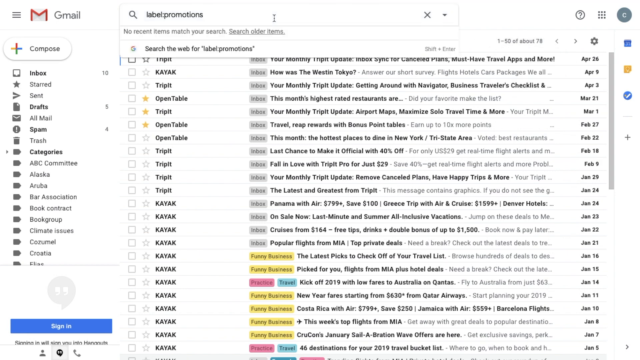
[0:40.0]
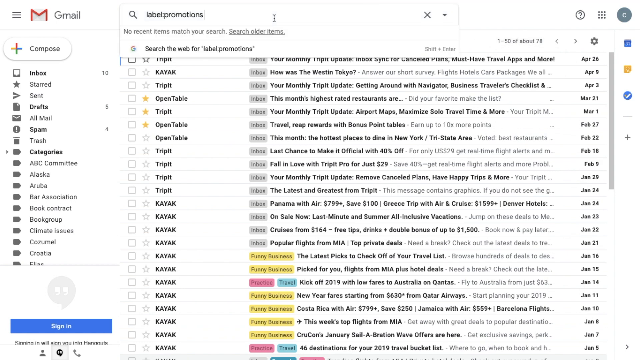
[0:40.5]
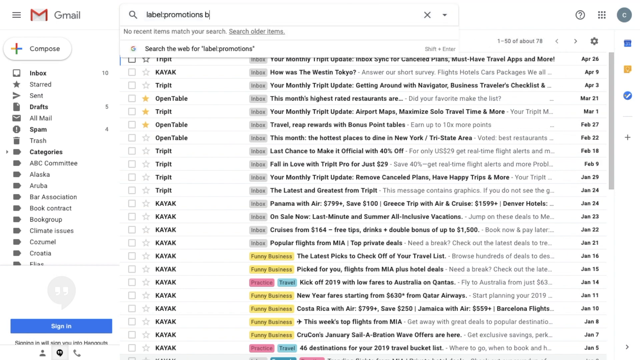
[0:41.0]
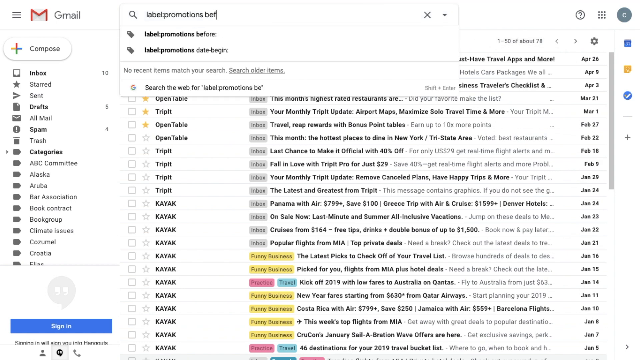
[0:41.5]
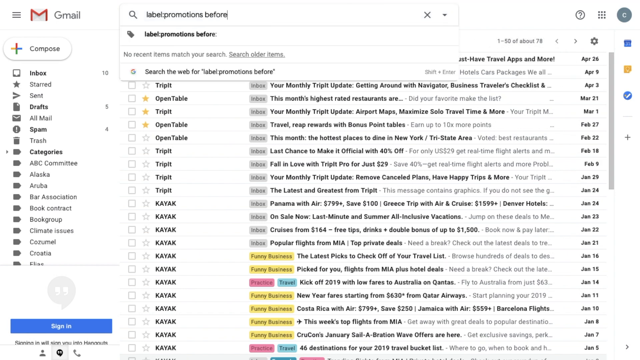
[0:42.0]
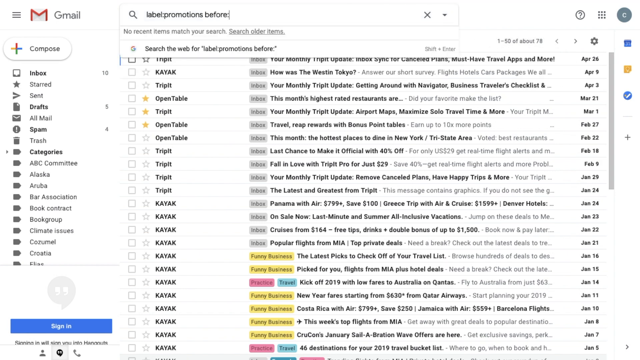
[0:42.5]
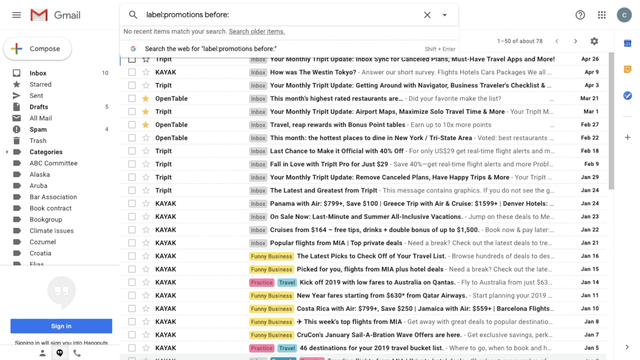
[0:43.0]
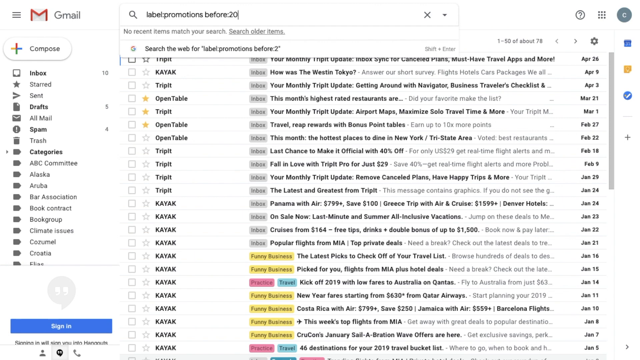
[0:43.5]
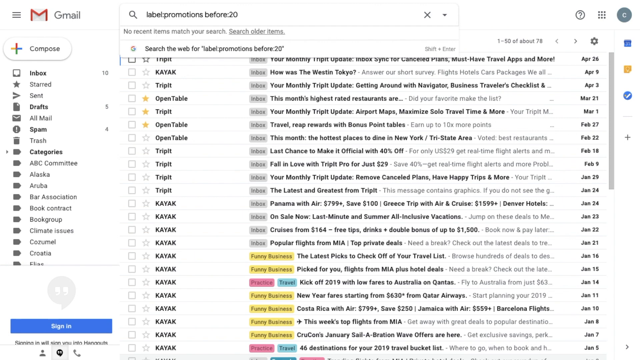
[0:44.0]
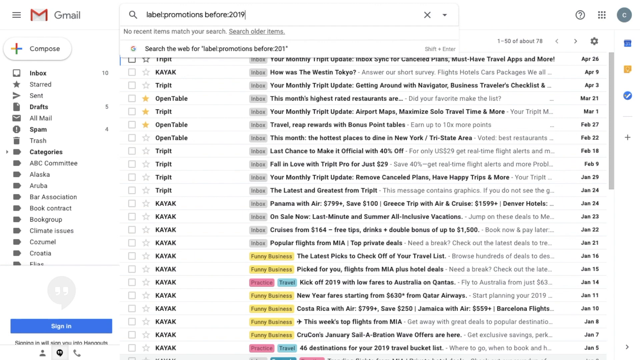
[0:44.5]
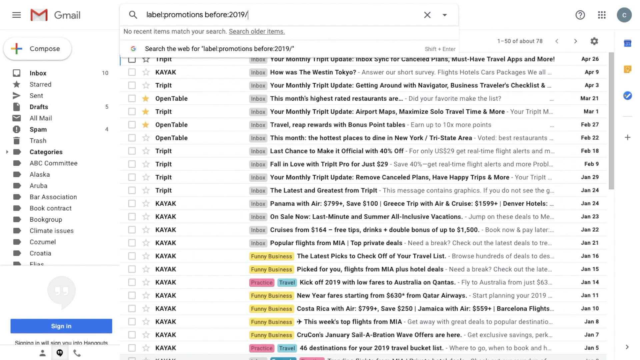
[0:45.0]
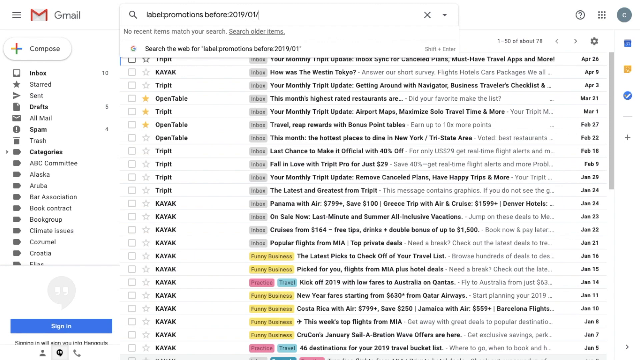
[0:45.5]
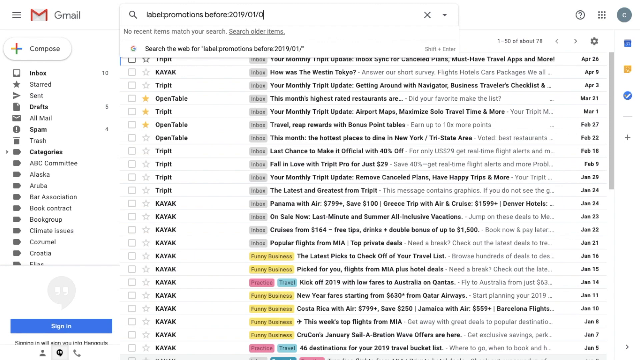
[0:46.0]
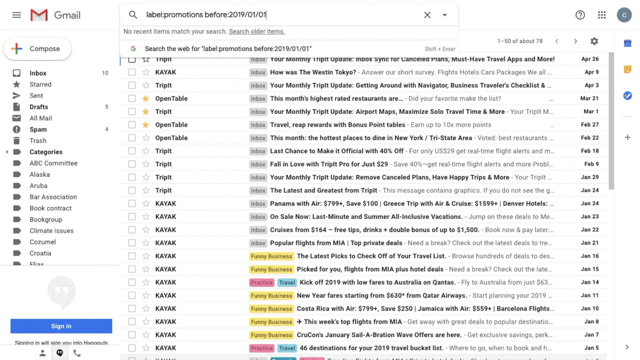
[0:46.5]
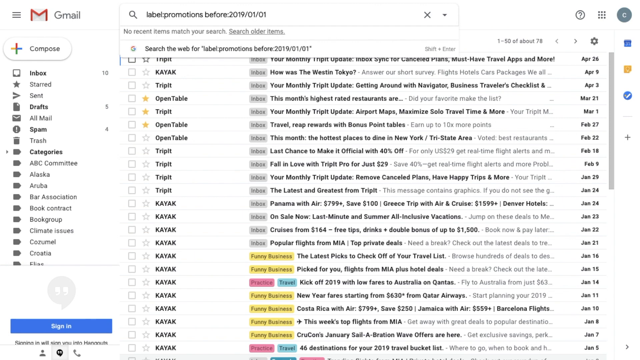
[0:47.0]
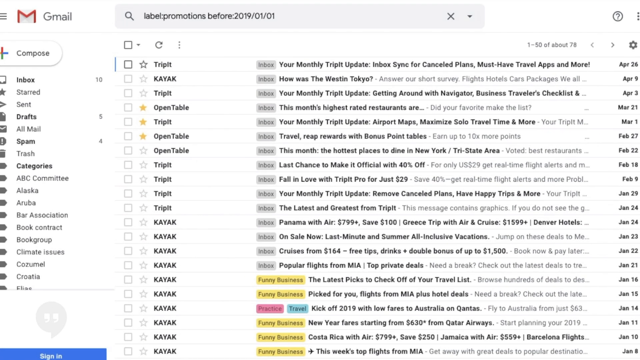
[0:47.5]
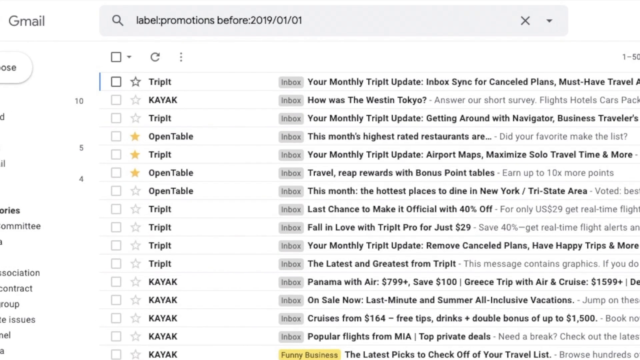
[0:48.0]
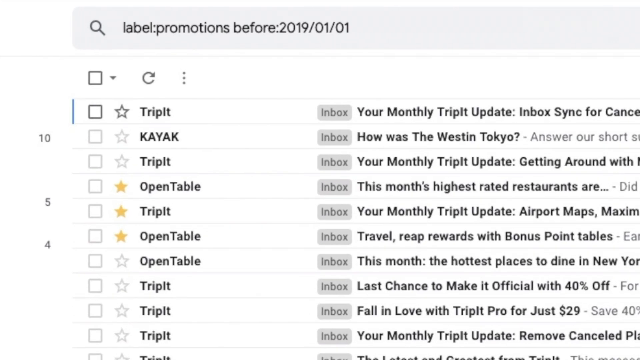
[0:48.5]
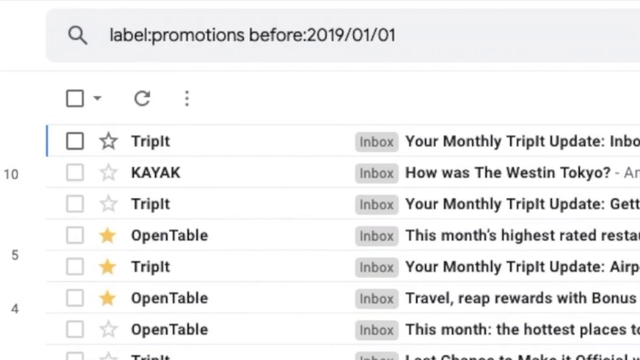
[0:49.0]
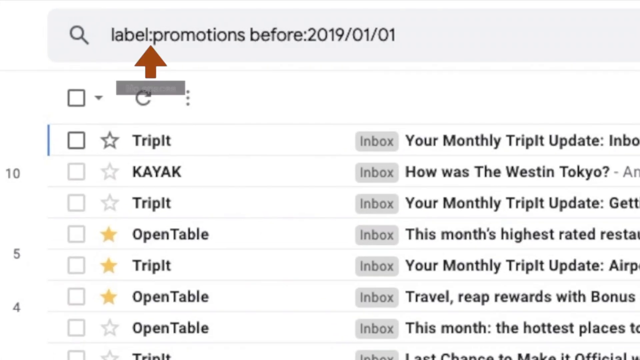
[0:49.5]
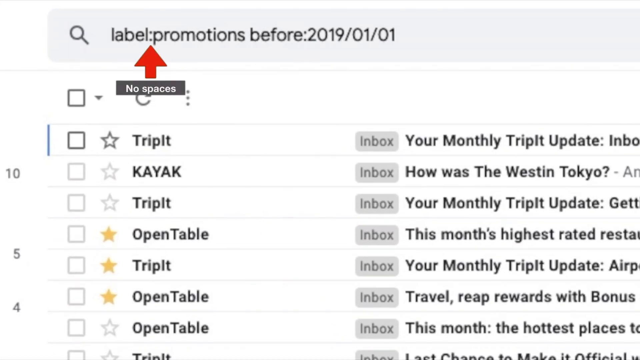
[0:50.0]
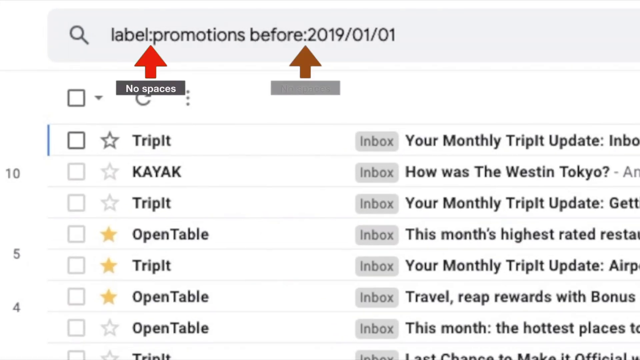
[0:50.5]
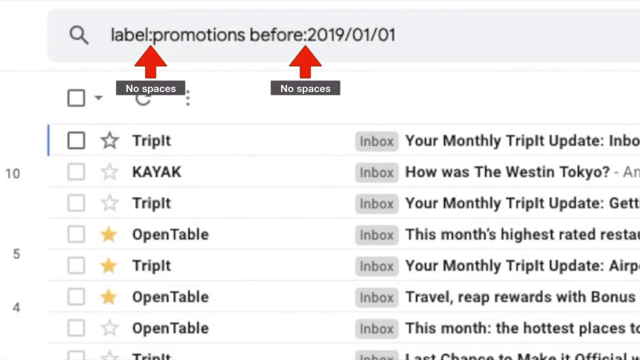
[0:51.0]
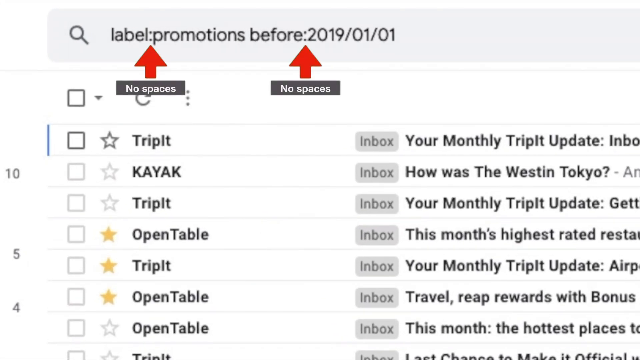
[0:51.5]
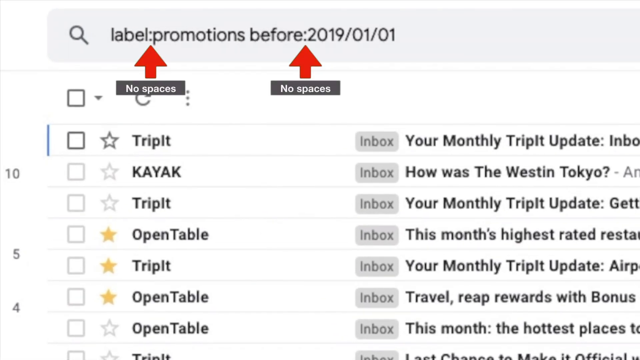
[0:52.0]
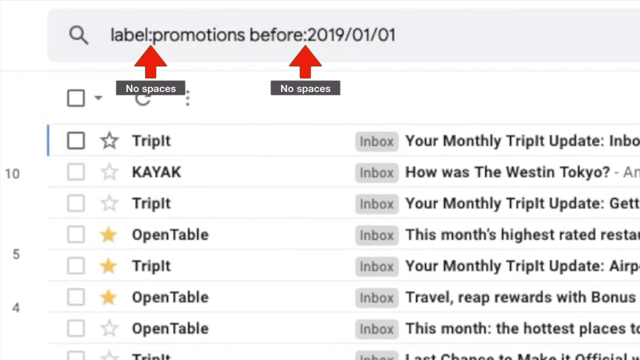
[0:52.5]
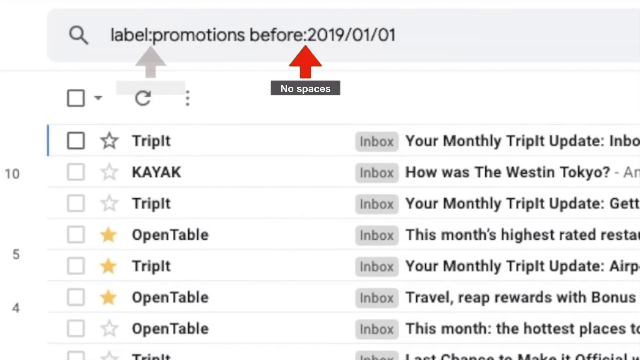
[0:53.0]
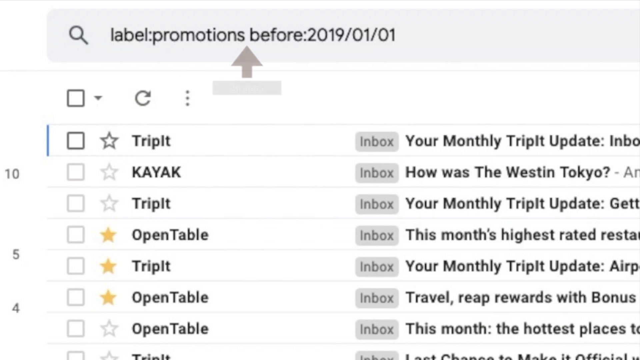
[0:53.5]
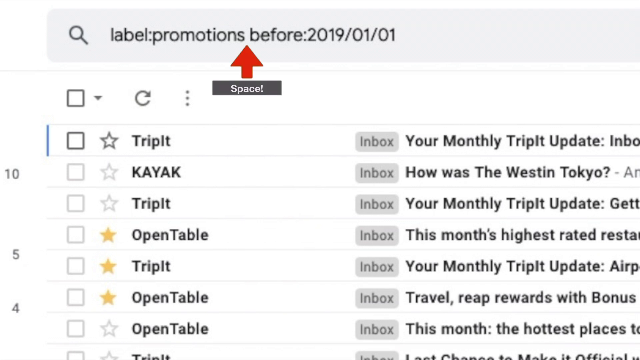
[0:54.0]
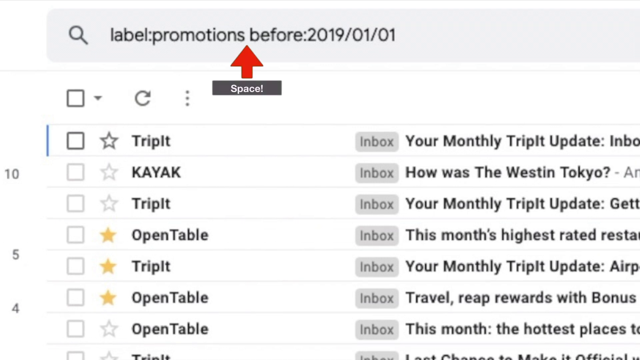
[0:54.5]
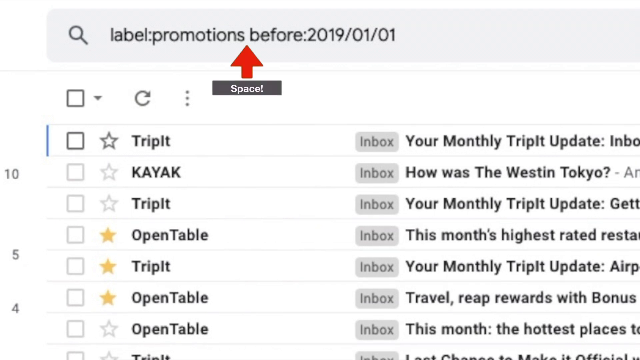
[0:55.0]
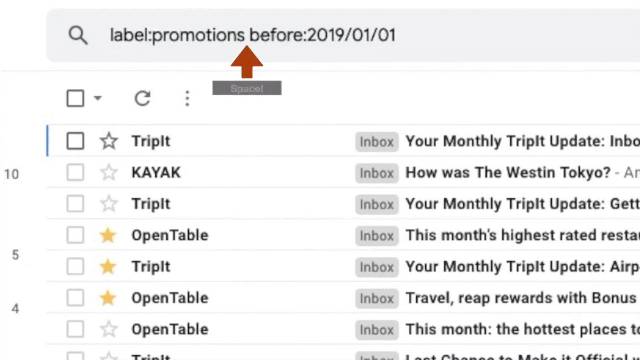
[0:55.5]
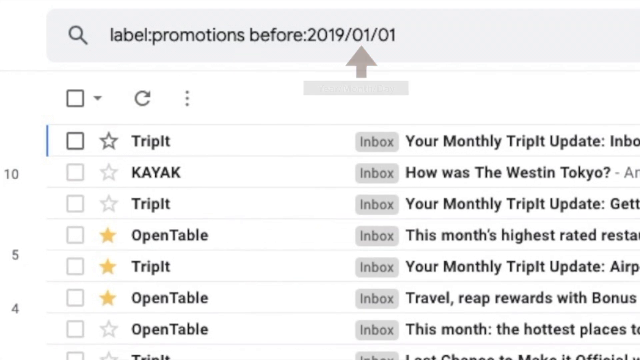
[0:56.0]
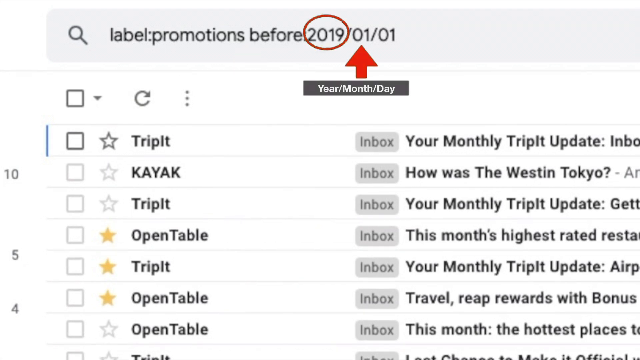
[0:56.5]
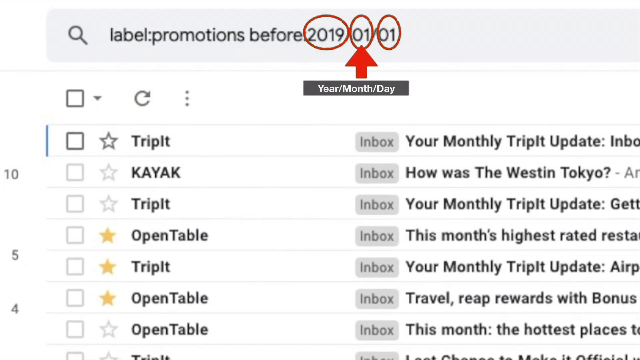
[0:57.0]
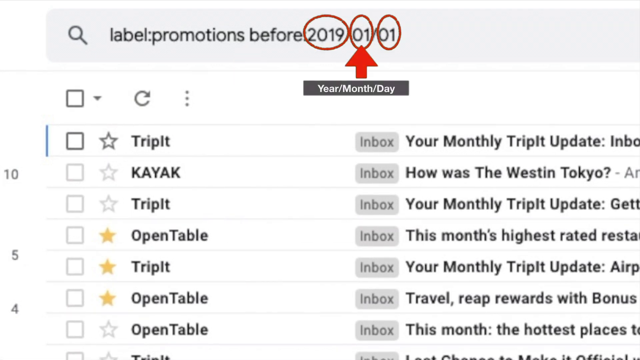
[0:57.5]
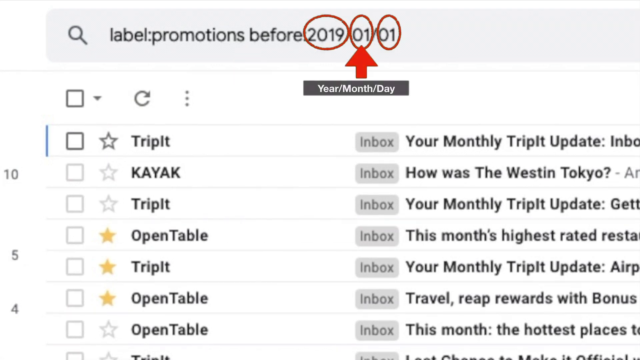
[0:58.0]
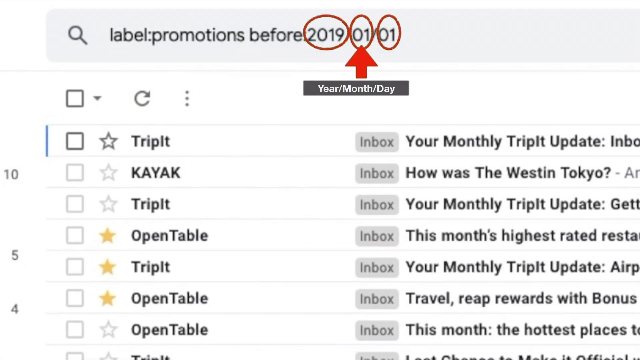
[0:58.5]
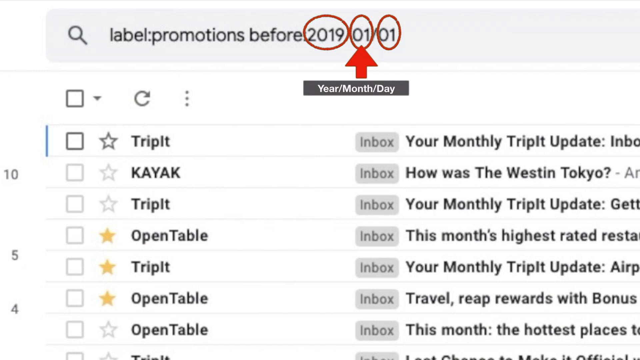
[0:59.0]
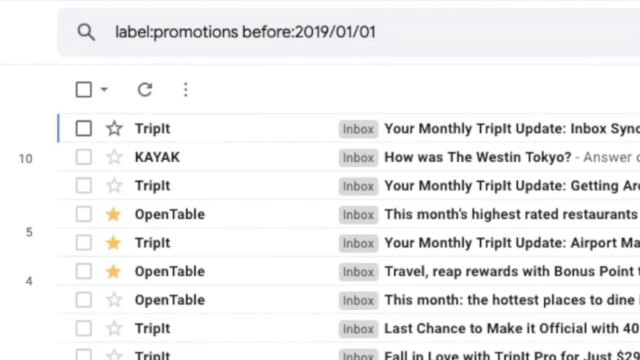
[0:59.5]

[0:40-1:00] The search "label:promotion before:2019/01/01" is typed in, with no spaces between the parts and the date written as year, month, then day; the only space is between "promotion" and "before". The Gmail interface shows a Hangouts area, a call sign and an account, a compose button with a plus, and the counts Inbox 10, Drafts 5 and Spam 4.